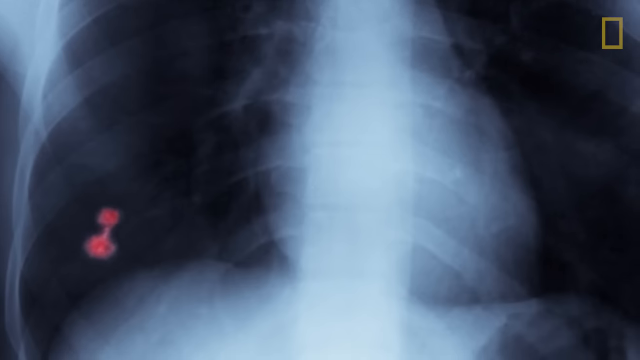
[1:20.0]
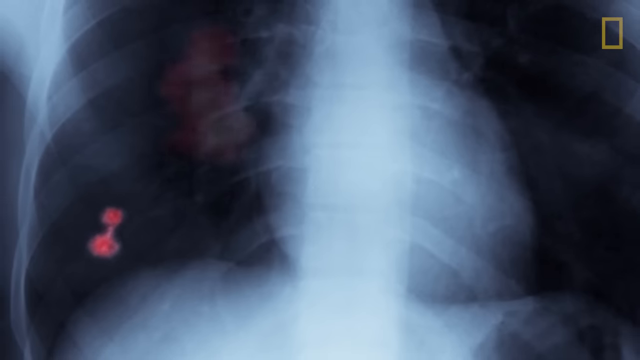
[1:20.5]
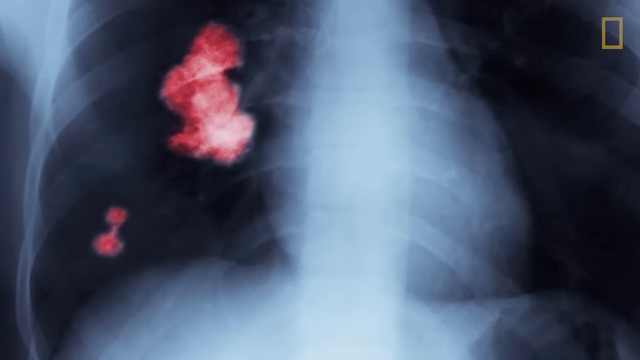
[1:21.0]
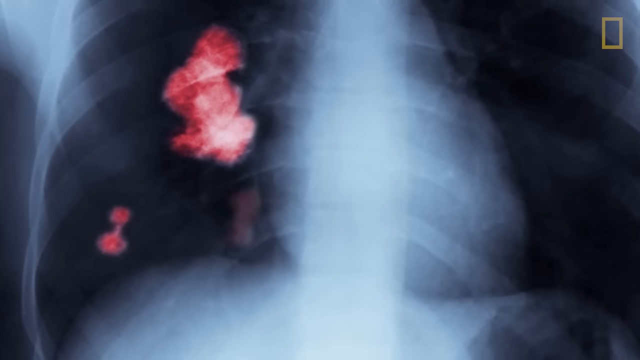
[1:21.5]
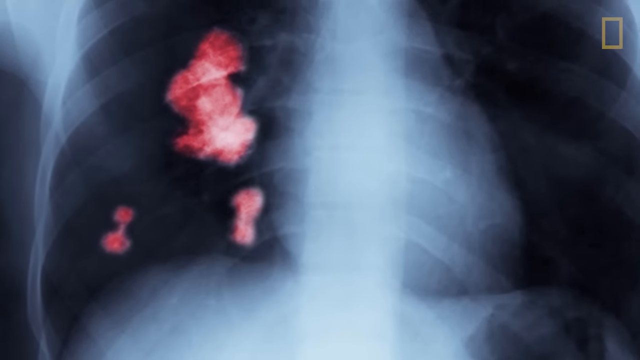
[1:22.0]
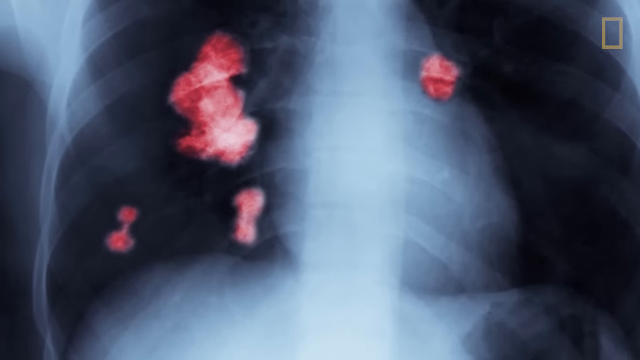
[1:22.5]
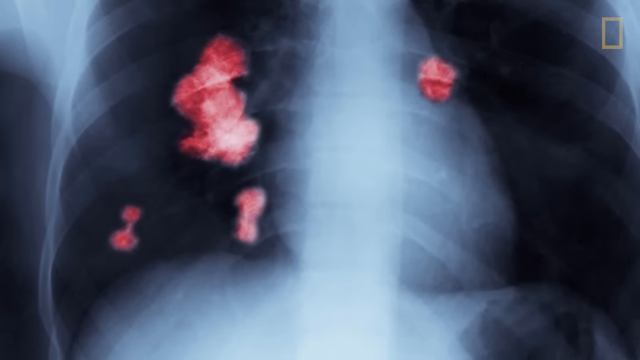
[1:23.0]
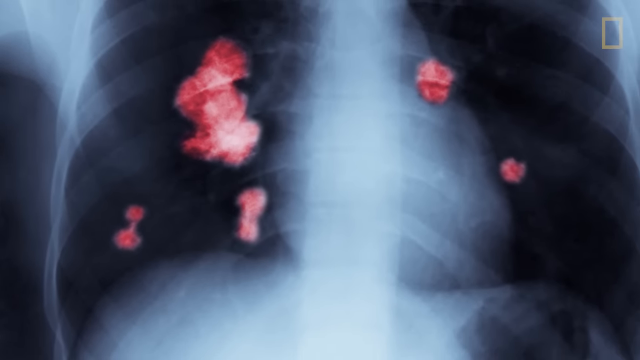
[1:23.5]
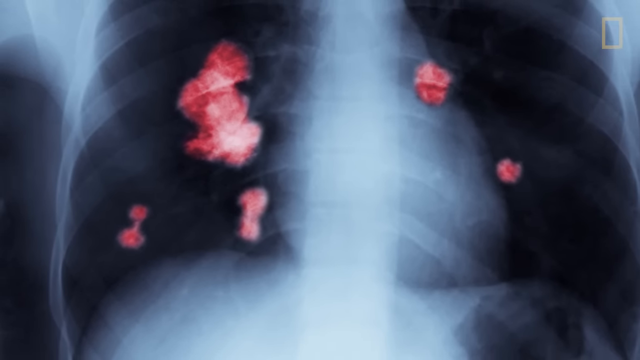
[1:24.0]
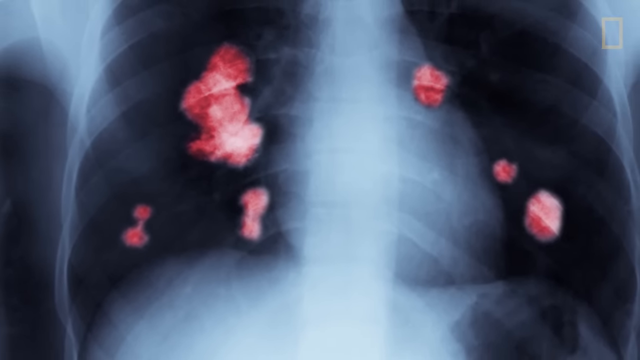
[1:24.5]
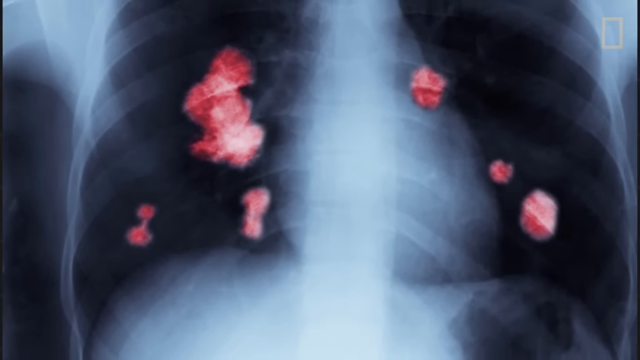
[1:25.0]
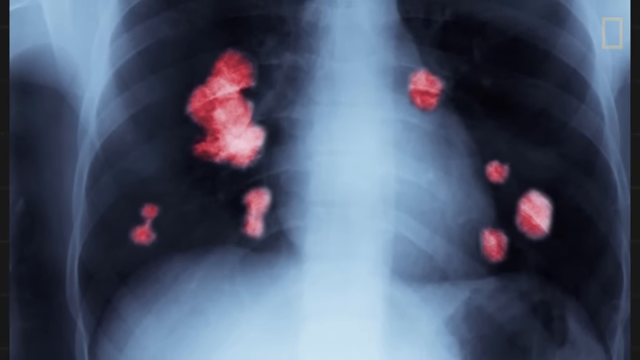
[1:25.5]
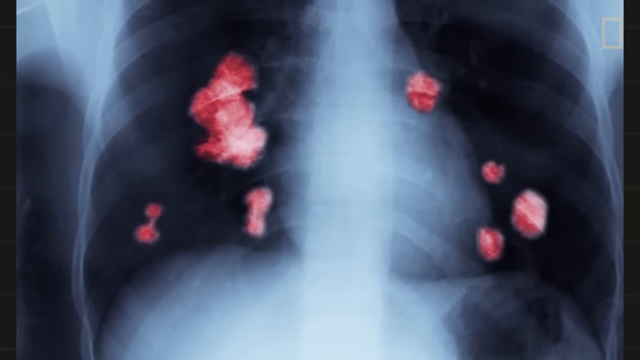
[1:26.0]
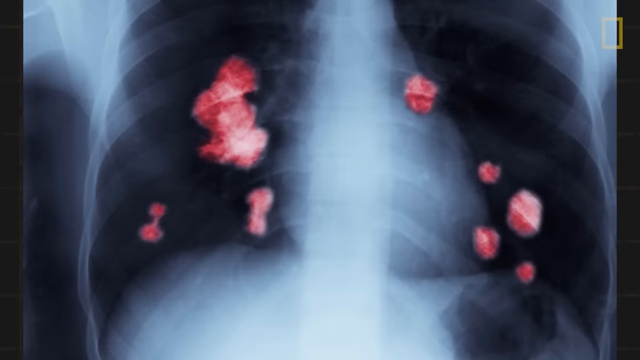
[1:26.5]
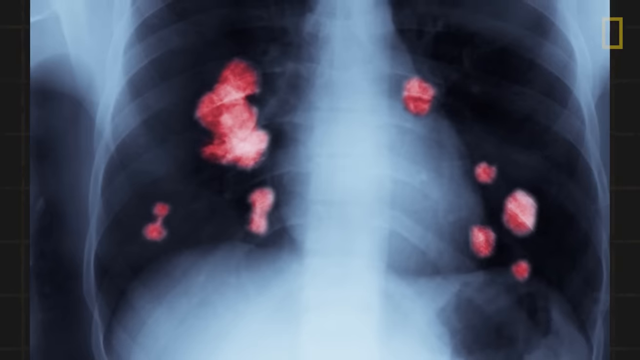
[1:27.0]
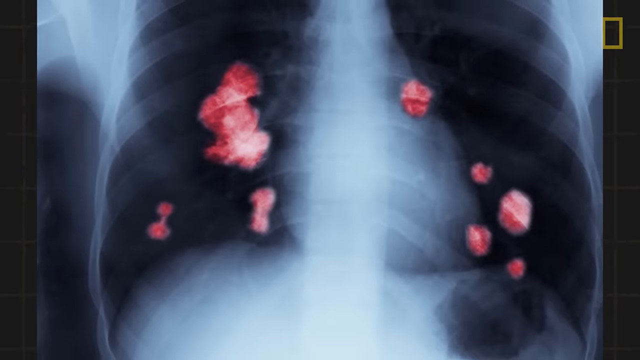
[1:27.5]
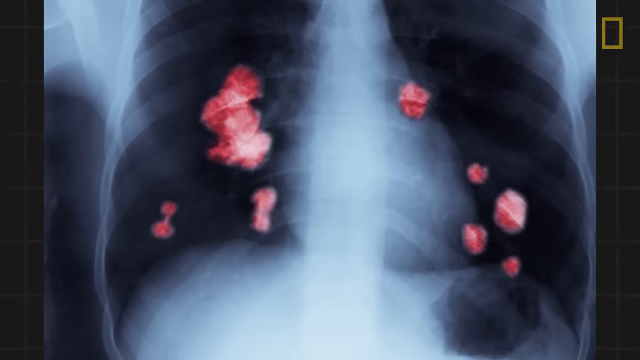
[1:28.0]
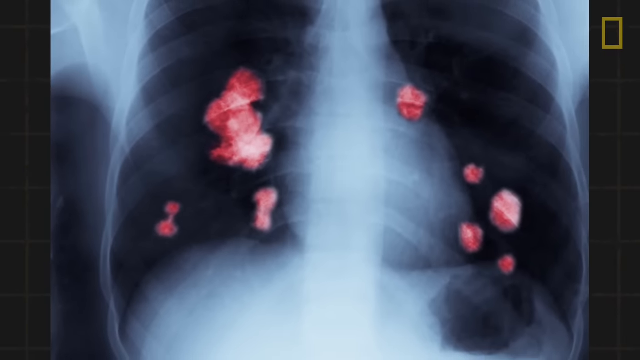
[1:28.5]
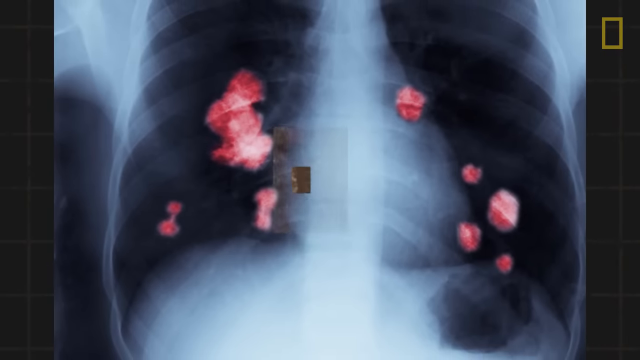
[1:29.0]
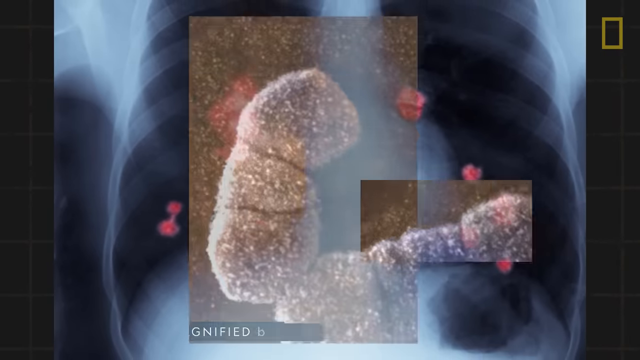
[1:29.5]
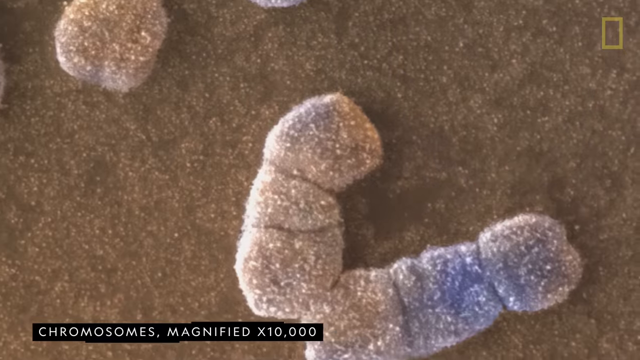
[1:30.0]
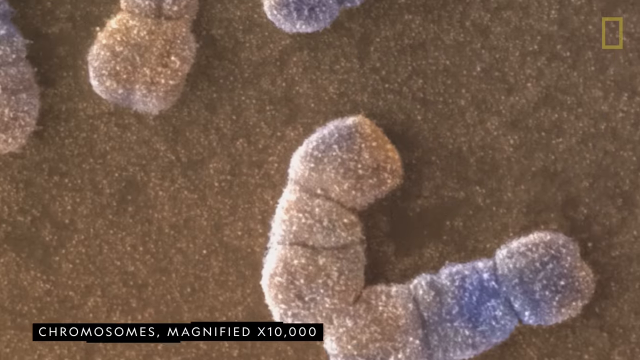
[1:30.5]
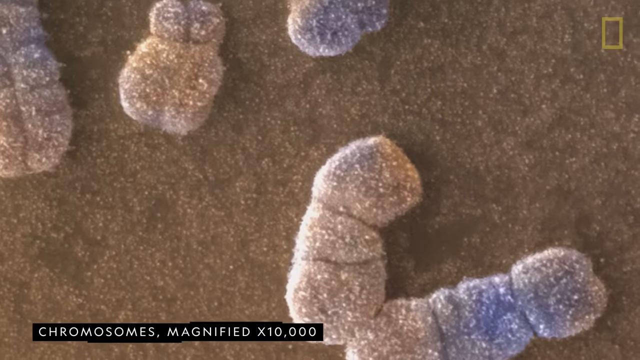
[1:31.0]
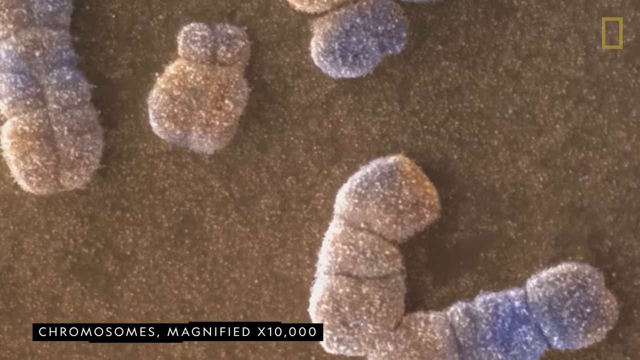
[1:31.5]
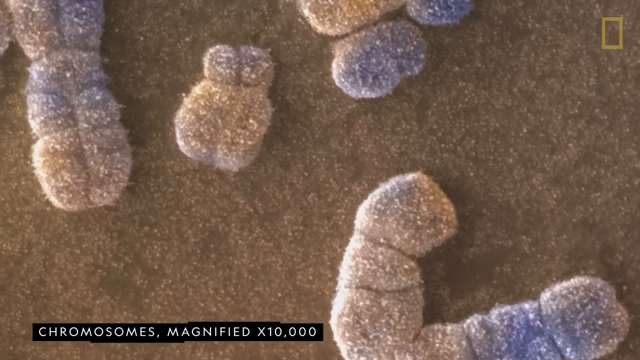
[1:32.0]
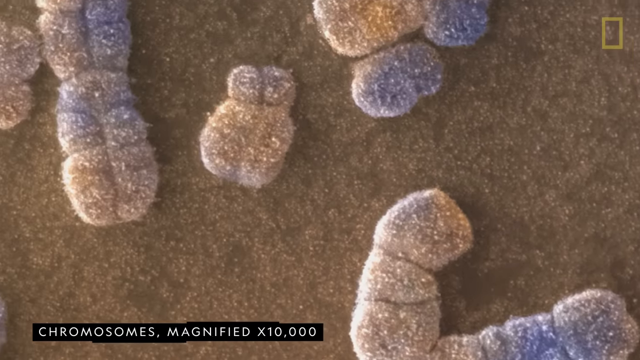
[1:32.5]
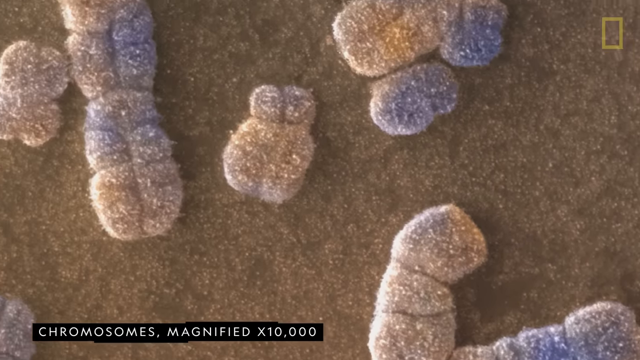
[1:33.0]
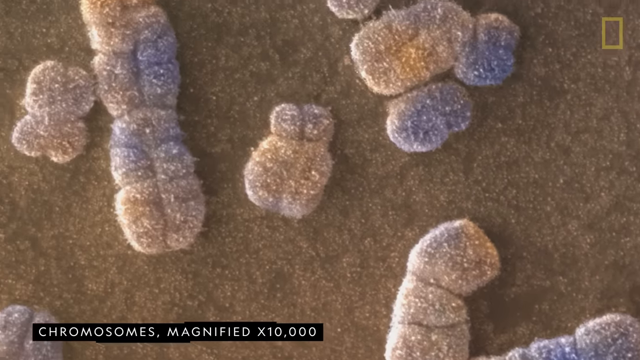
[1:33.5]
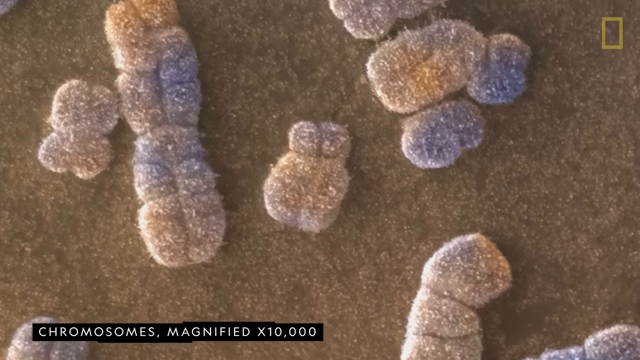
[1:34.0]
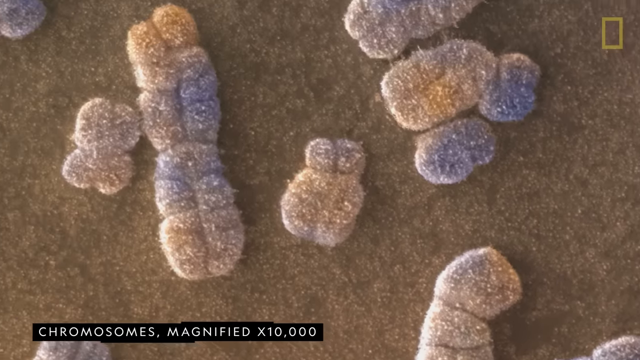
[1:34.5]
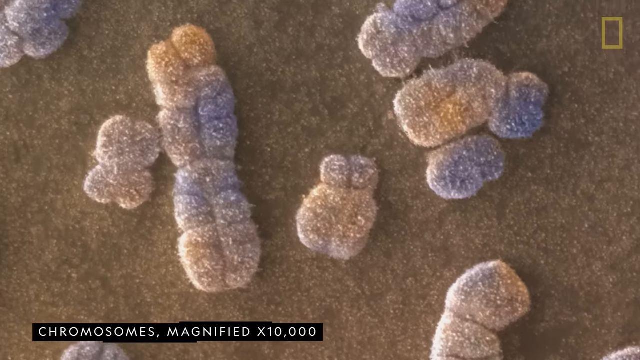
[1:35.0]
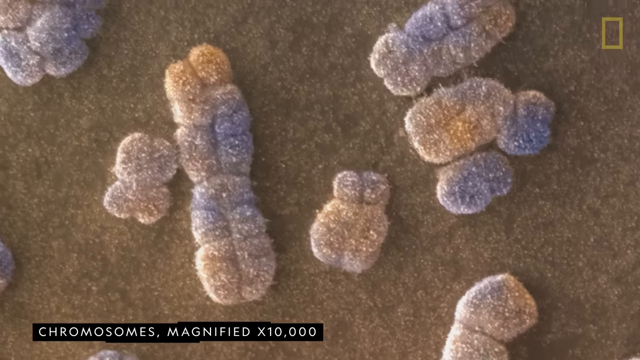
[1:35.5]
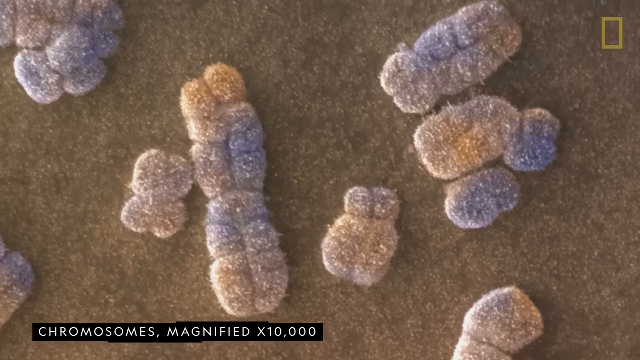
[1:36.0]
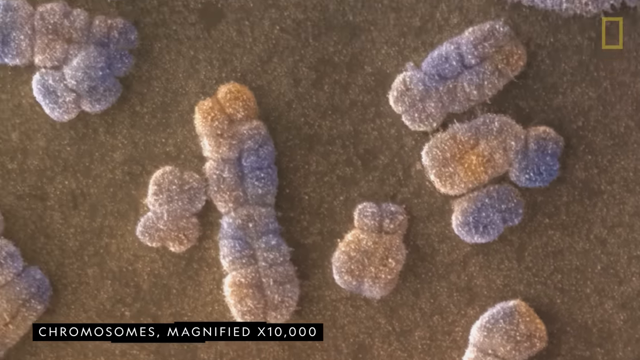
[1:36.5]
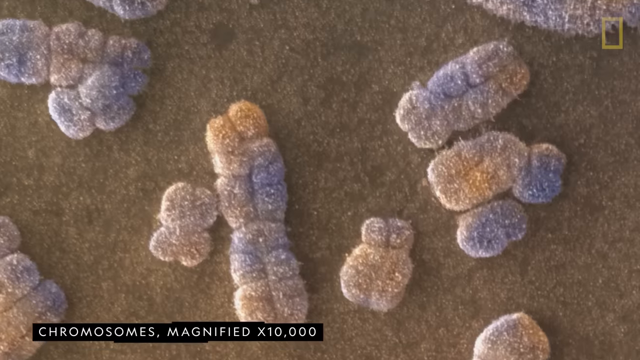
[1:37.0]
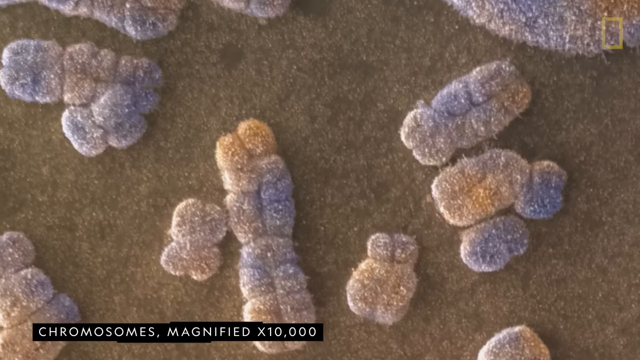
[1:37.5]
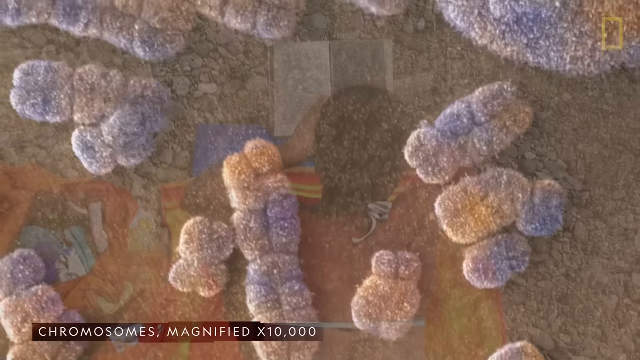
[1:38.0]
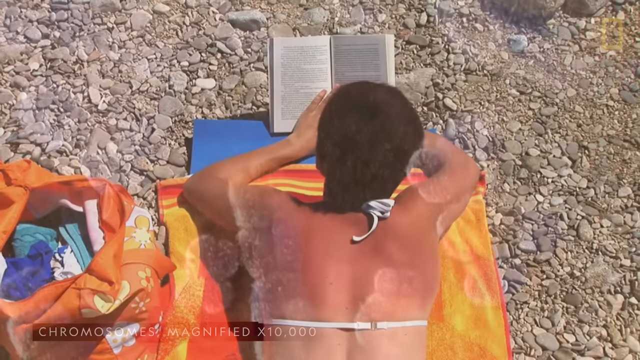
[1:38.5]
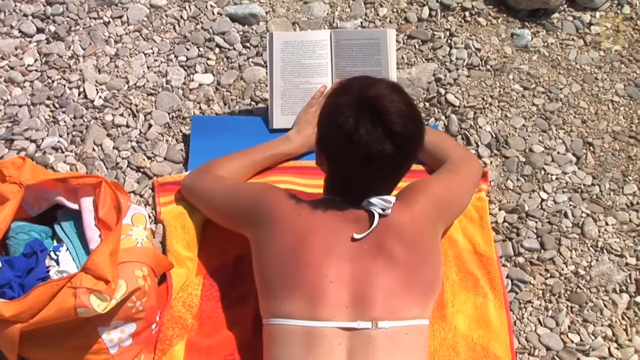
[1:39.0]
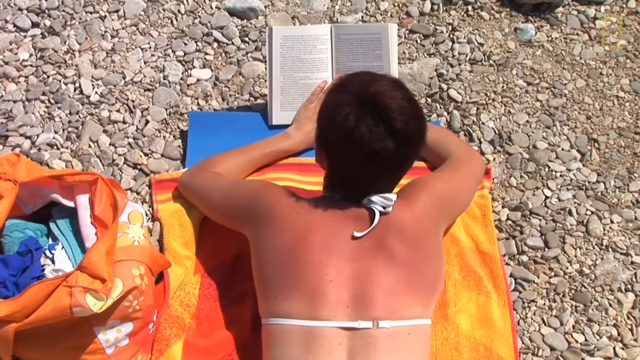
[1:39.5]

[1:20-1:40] An x-ray image appears, possibly of a person's torso, with a rib cage and spinal column; the background is black and the bones are white and light gray. Red and pink masses then show up on the left and right sides, irregularly shaped blobs appearing here and there. The scene shifts to a grainy-textured image: the background looks like a flat area of sand, and on top are gritty growths, perhaps masses of clusters. Next is a photograph of a person lying on an orange beach towel on a beach, reading a book. A light rock-covered beach is around them, and their back looks a bit lightly sunburned. To their left is an open bag, possibly a tote bag, also orange. The back of the person's head is visible, with brown hair.